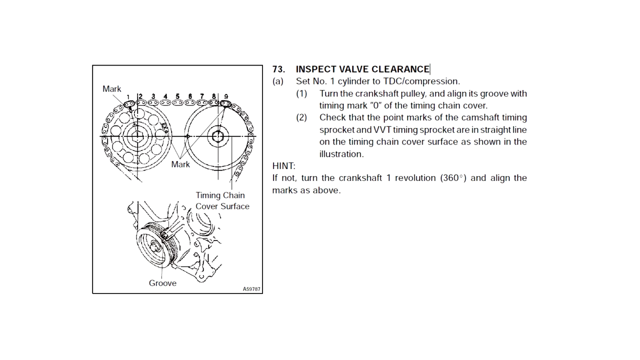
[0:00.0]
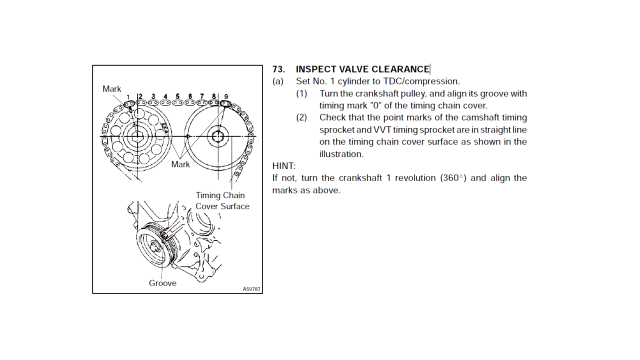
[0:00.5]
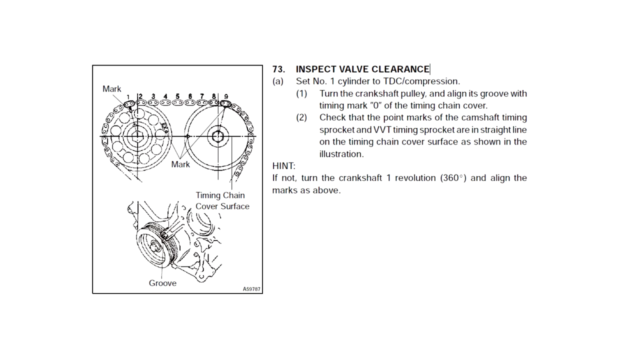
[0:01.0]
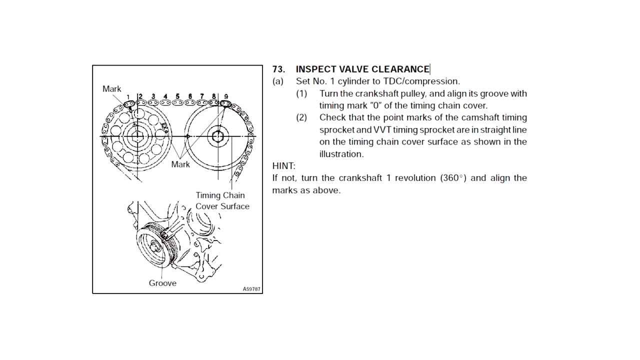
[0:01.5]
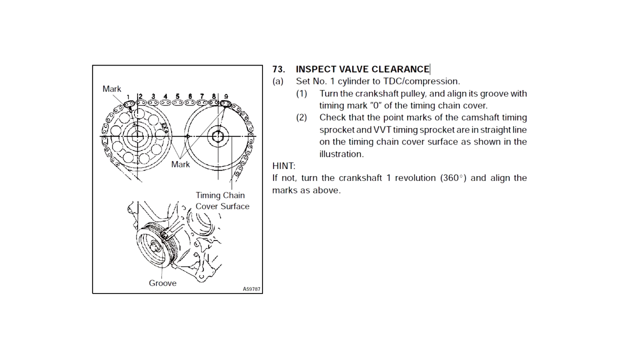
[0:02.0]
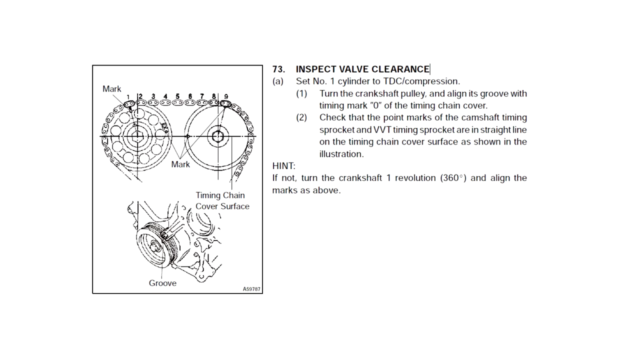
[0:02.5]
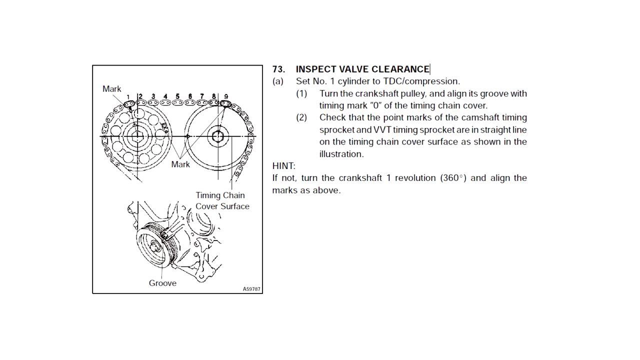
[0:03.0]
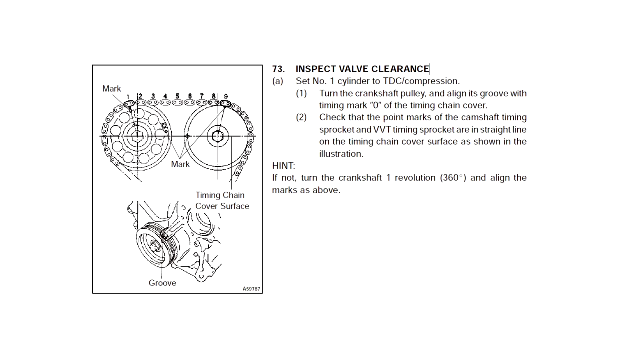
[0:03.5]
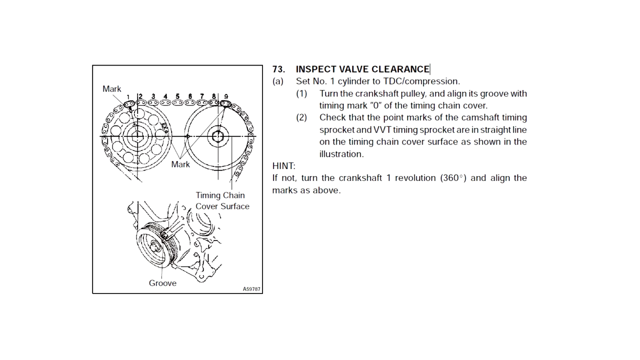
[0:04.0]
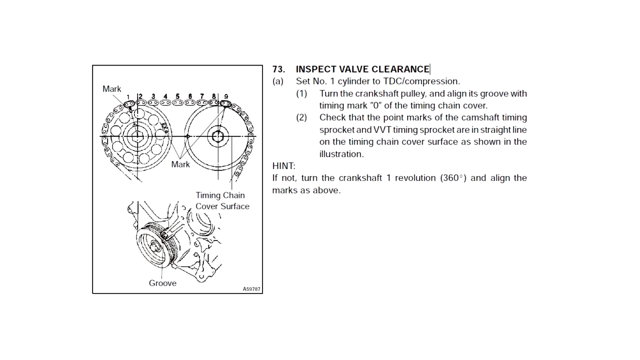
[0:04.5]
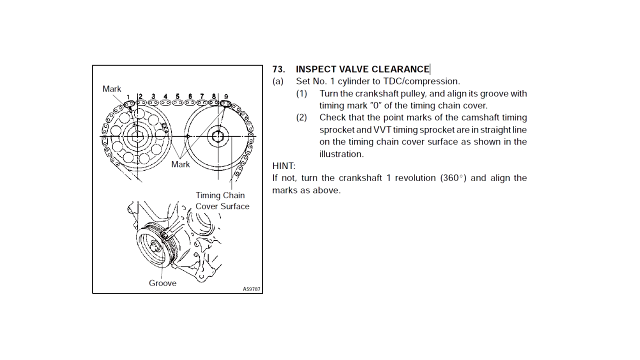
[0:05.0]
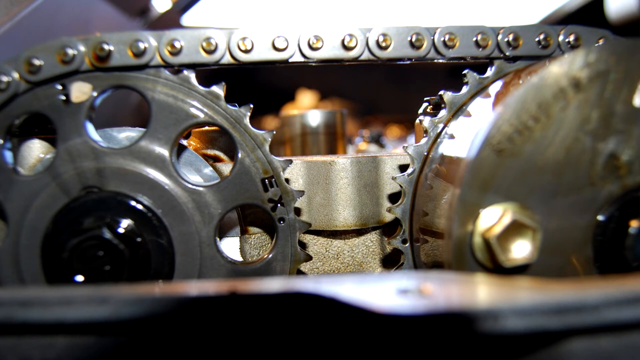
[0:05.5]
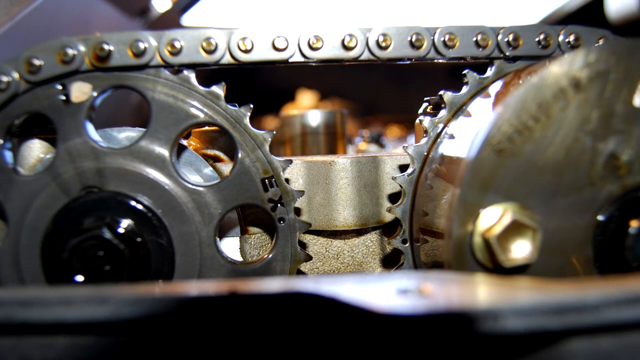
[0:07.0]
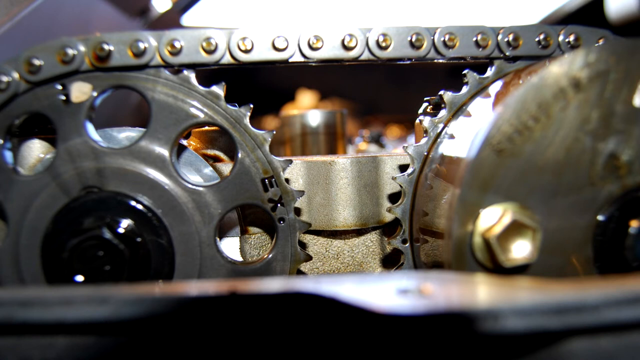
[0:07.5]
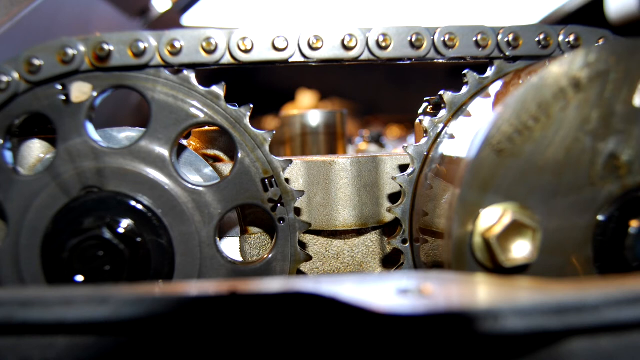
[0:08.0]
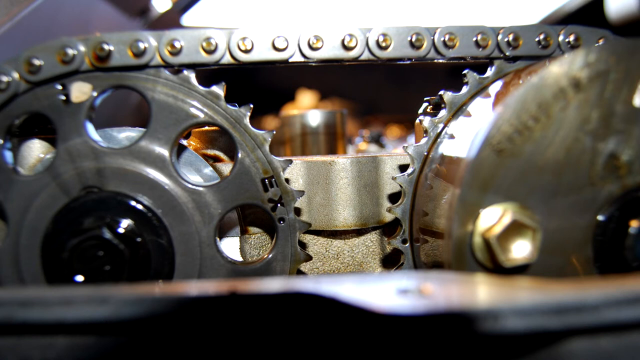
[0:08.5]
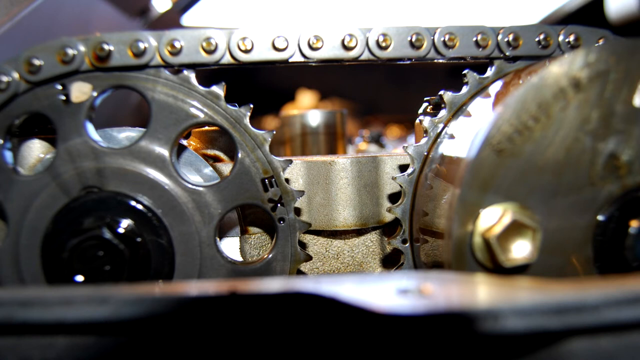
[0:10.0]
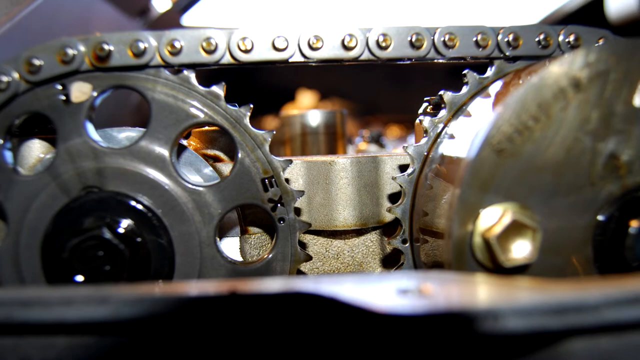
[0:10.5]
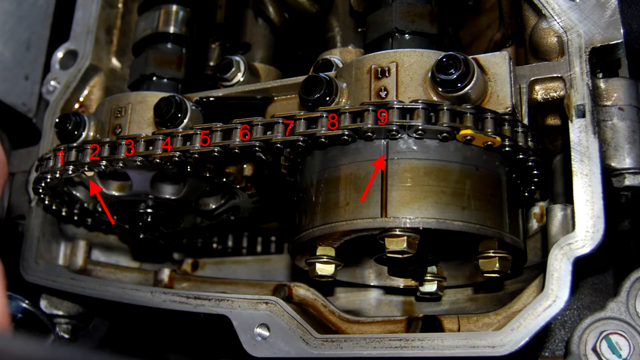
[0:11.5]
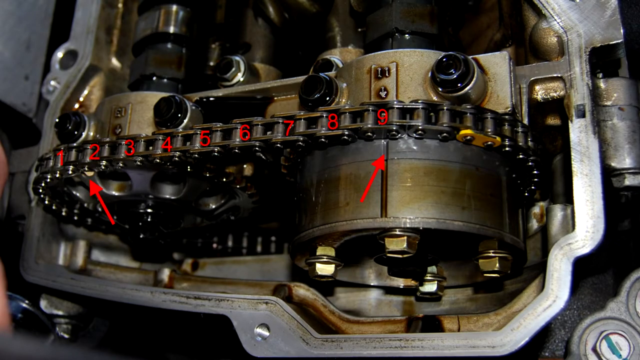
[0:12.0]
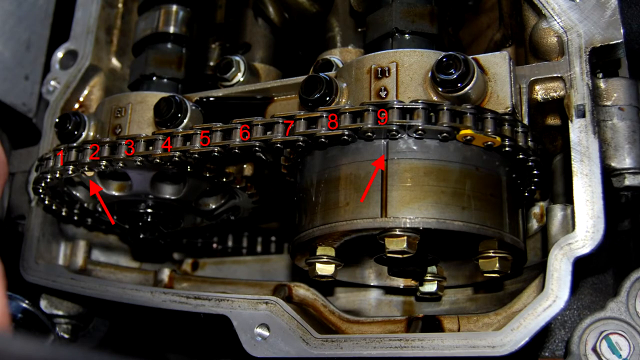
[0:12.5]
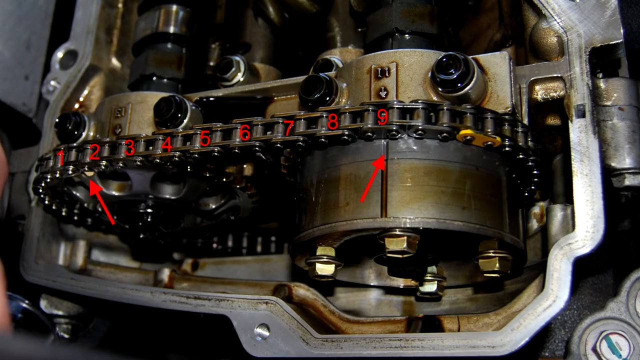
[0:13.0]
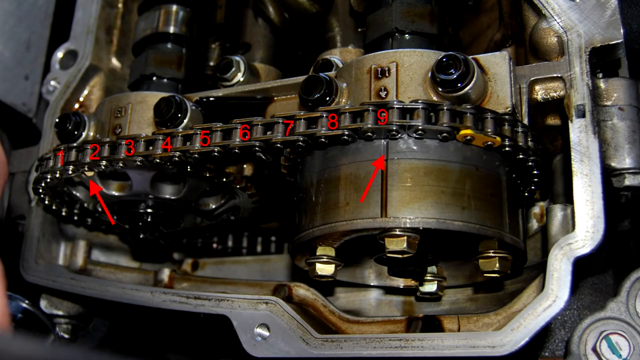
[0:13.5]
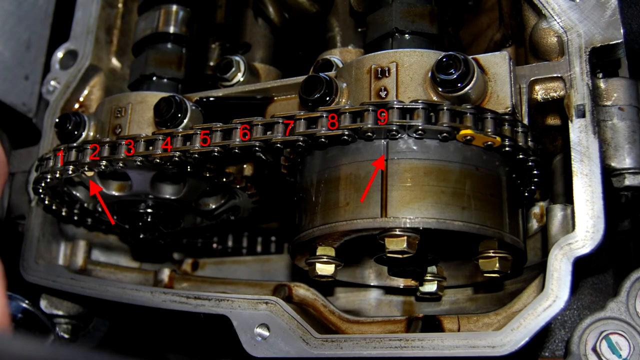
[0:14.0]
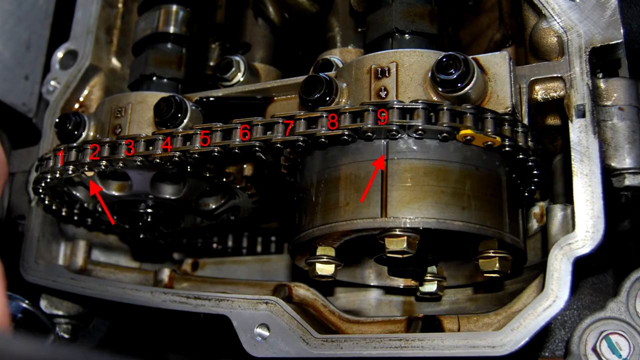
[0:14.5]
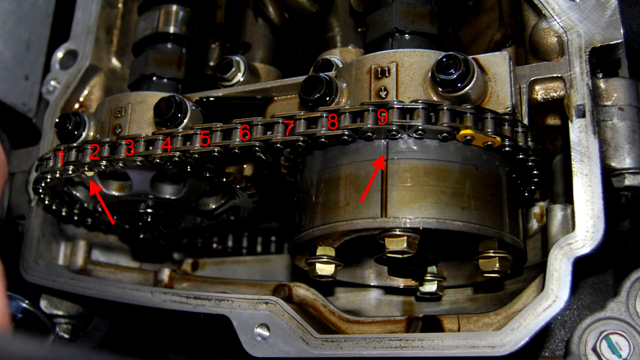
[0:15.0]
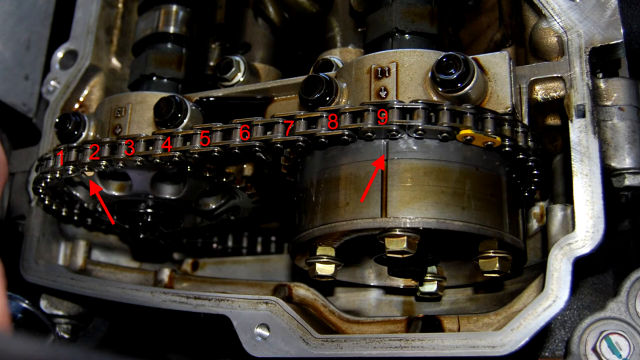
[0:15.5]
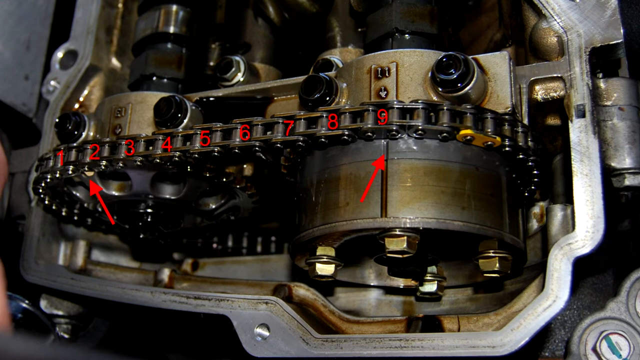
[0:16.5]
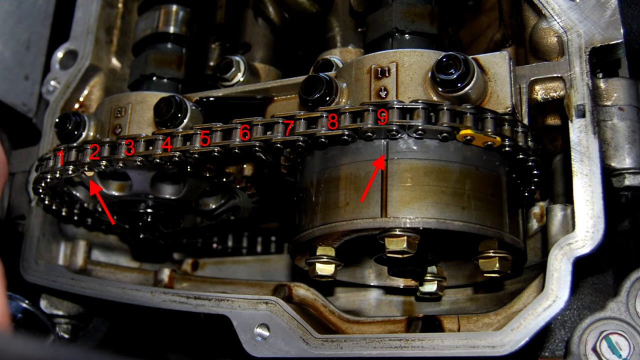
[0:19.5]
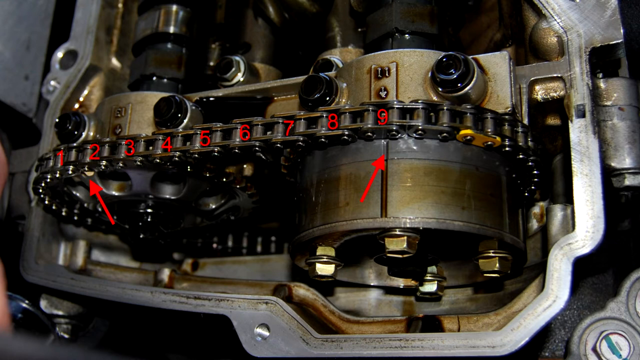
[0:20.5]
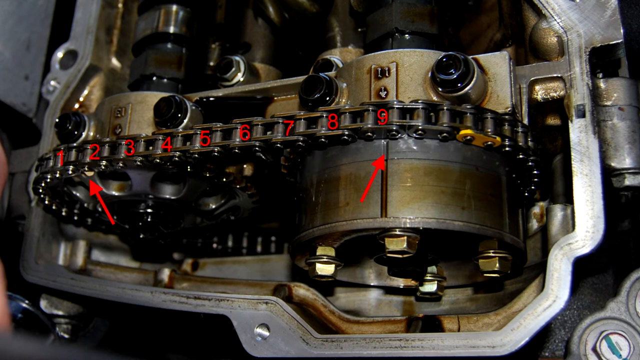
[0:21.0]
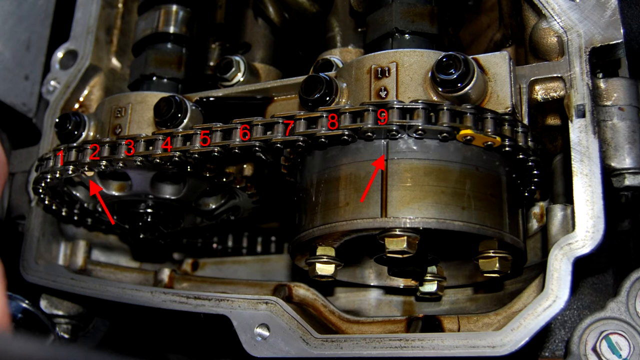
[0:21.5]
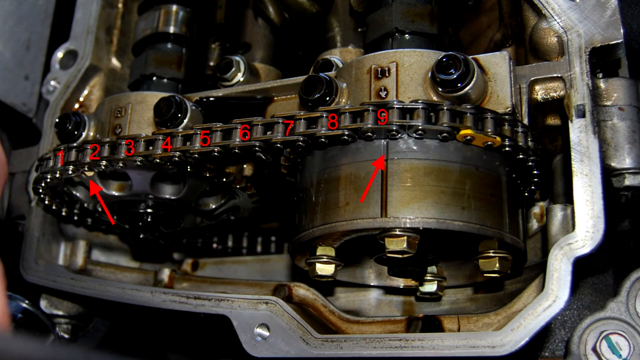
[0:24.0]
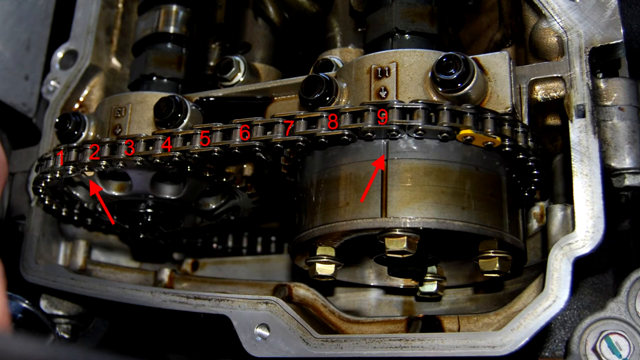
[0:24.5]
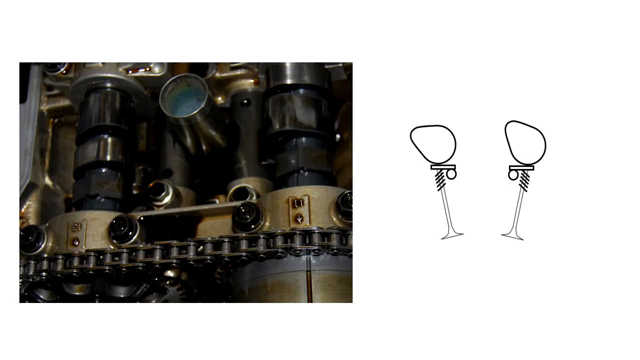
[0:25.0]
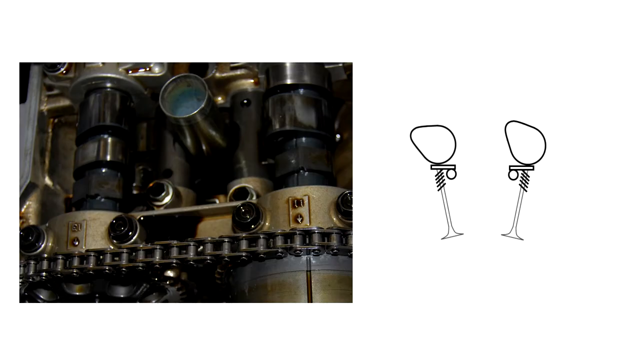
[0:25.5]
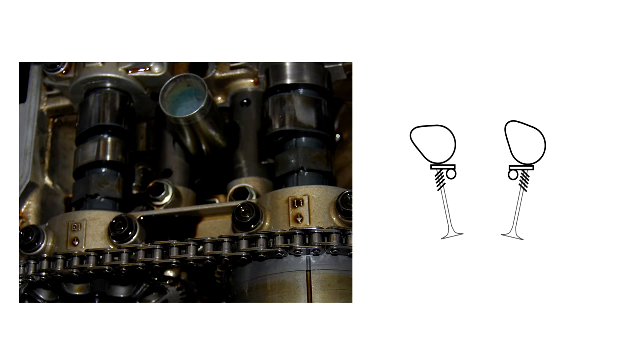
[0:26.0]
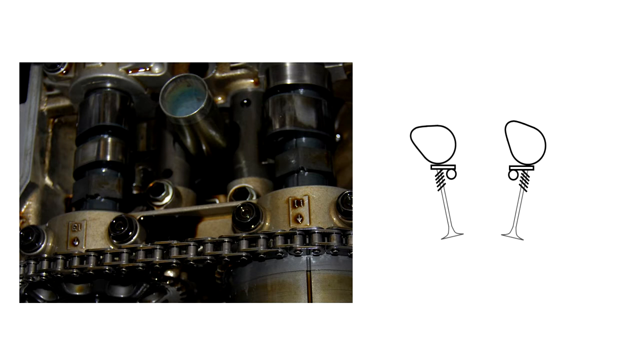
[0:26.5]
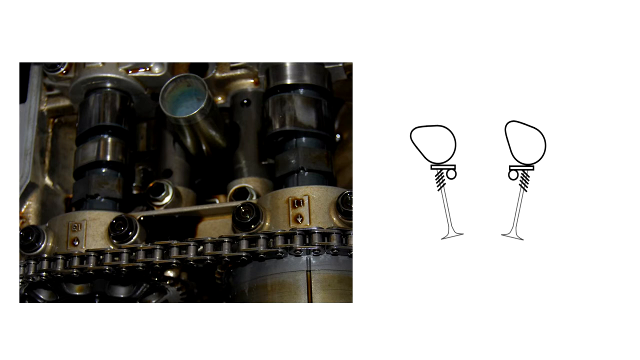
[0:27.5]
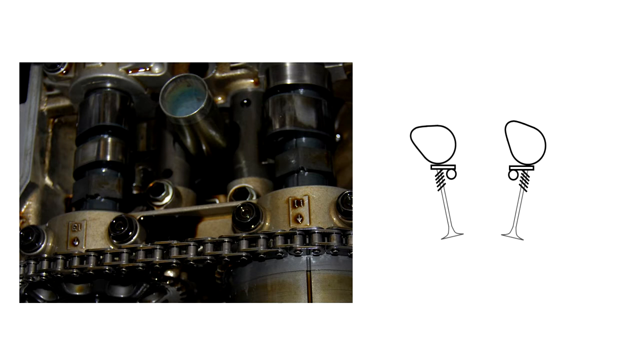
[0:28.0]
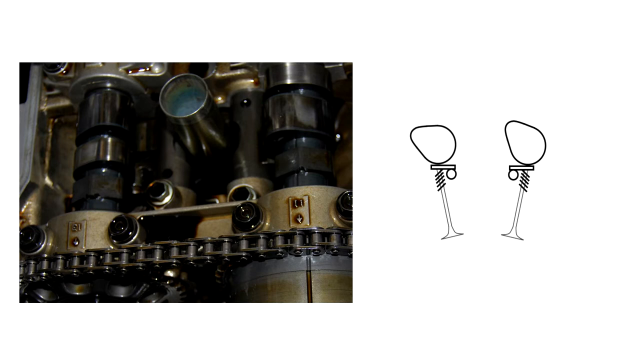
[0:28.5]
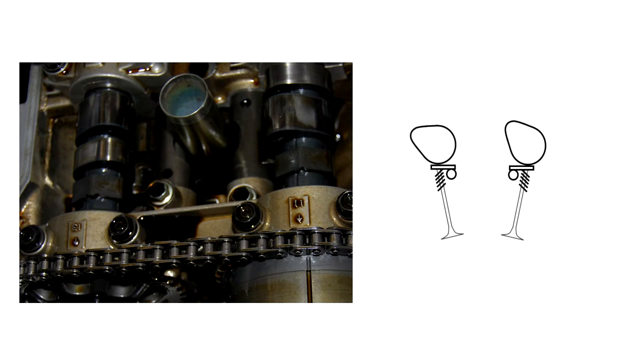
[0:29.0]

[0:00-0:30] On the right side of the screen, written in black, the text reads "73, Inspect Valve Clearance." Beneath it: "Set number one cylinder to TDC compression. Turn the crankshaft pulley and align its grooves with timing mark zero of the timing chain cover. Number two, check that the point marks of the camshaft timing sprocket and VVT timing sprocket are in line on the timing chain cover surface as shown in the illustration." Under that it says "Hint, if not, turn the crankshaft one revolution, 360 degrees, and align the marks as above." To the left of the text is a small diagram showing a sprocket on the left and a pulley on the right, with the chain going over the top of the sprocket and then over the top of the pulley. Underneath, it says "timing chain cover surface" and shows the housing for the timing chain and the surface. The video then cuts to a picture of a sprocket going over another sprocket that is connected to a pulley, followed by another picture showing the same thing from above.